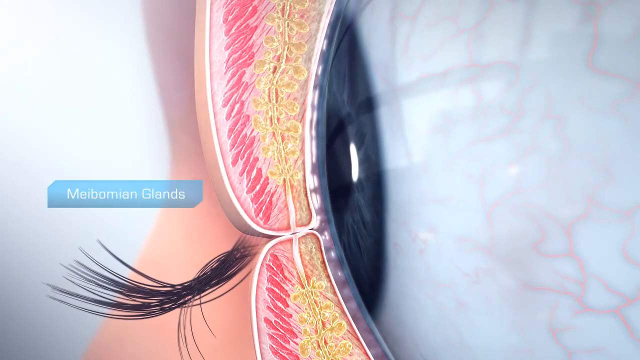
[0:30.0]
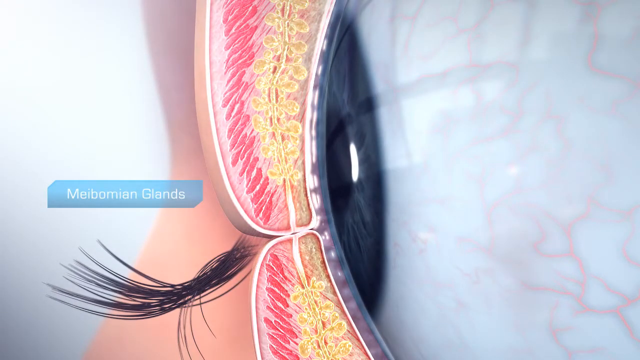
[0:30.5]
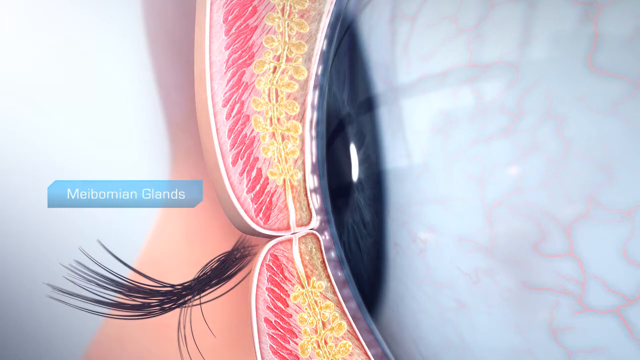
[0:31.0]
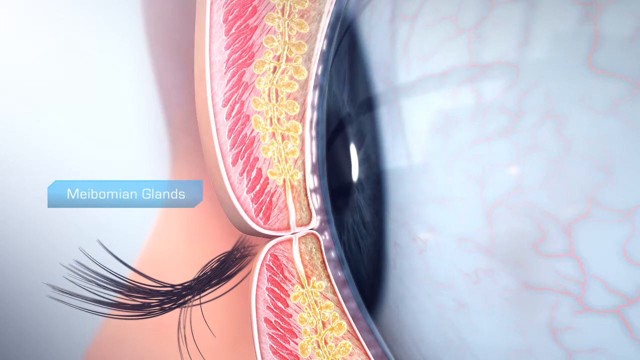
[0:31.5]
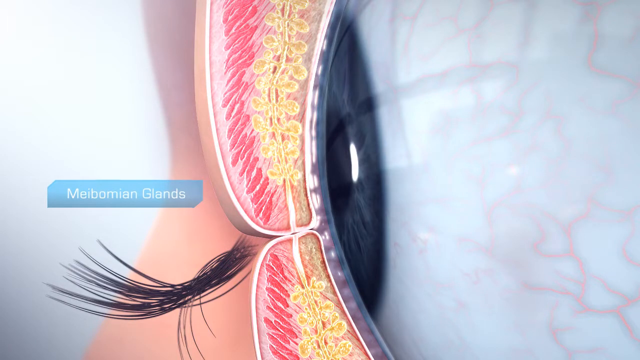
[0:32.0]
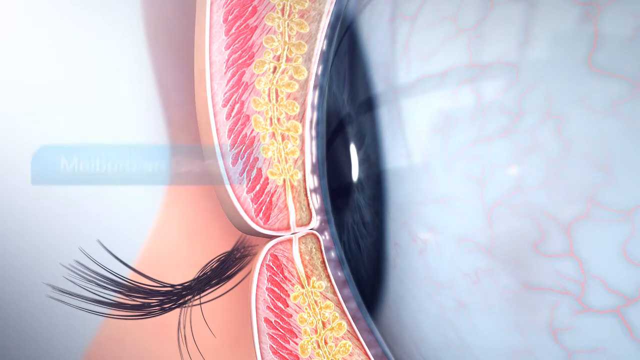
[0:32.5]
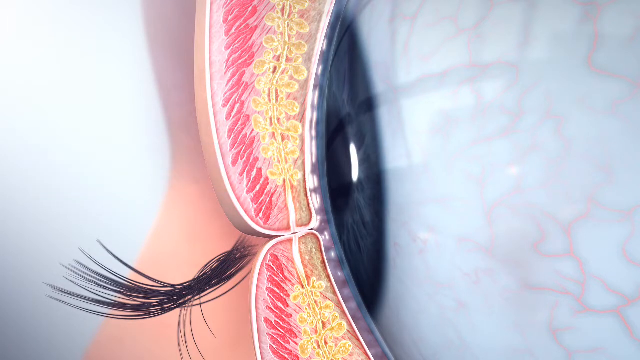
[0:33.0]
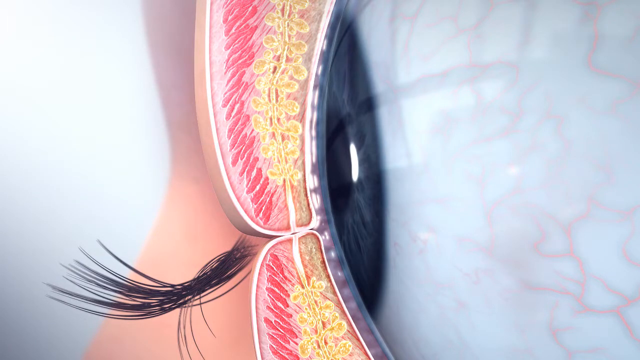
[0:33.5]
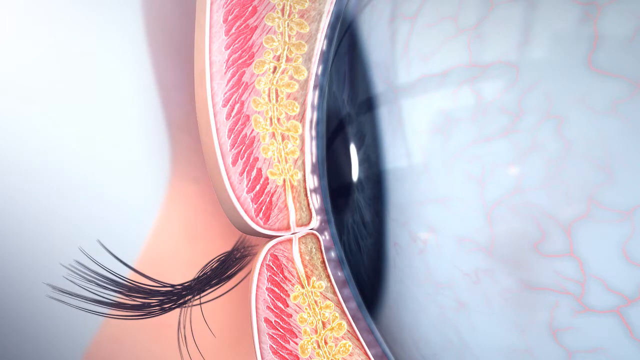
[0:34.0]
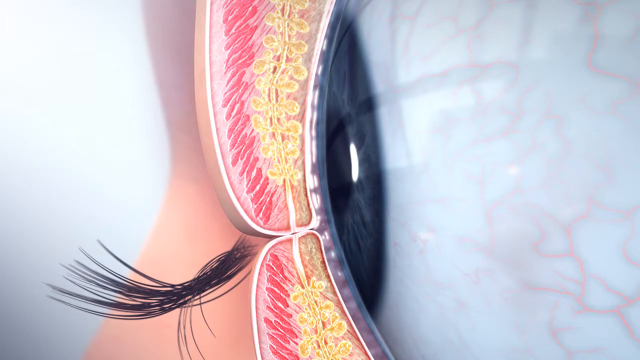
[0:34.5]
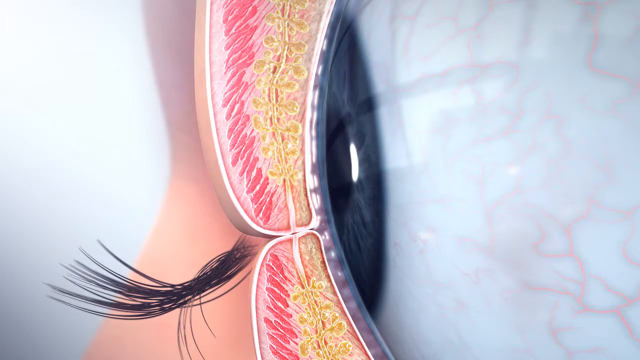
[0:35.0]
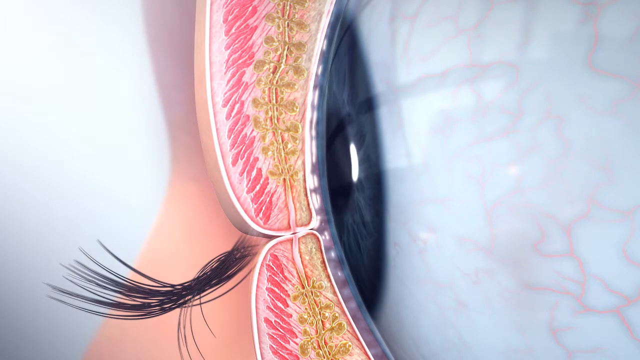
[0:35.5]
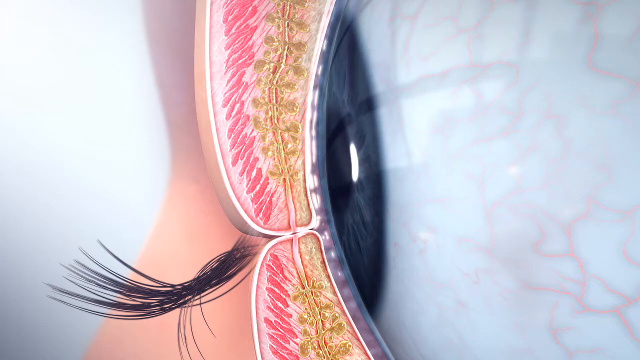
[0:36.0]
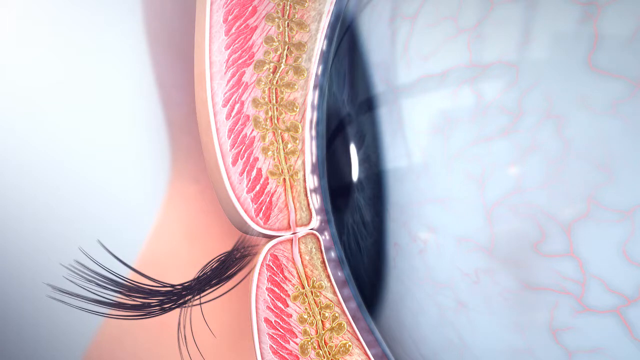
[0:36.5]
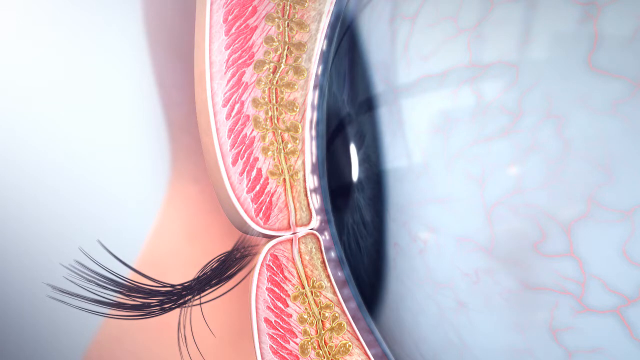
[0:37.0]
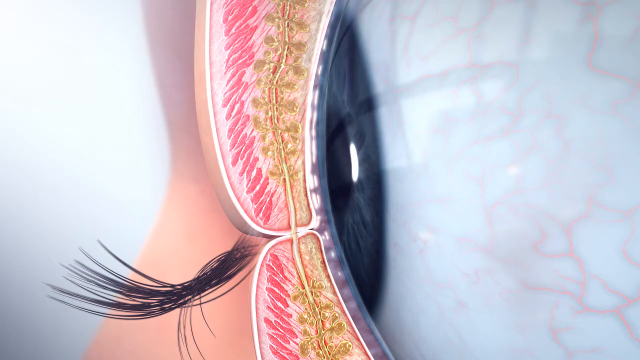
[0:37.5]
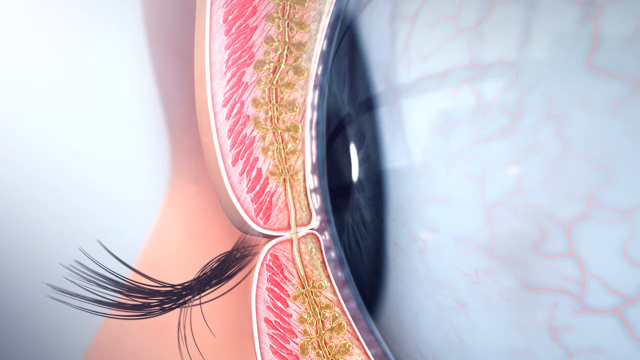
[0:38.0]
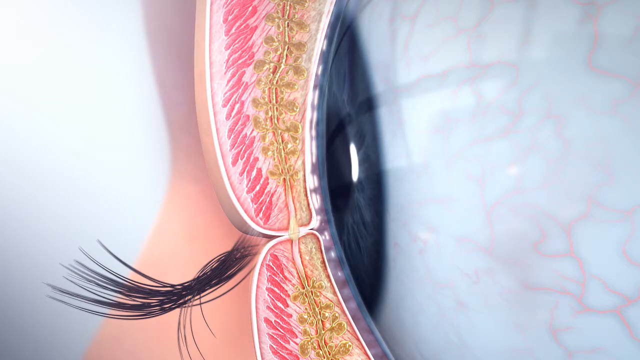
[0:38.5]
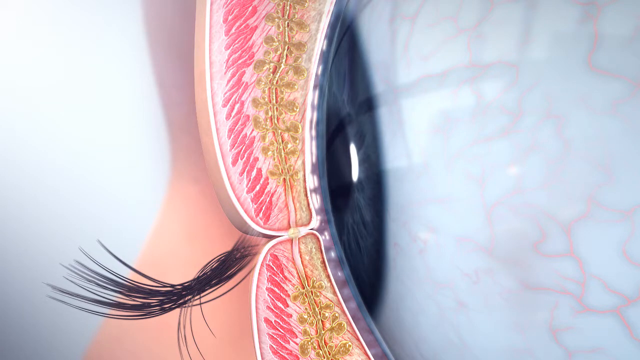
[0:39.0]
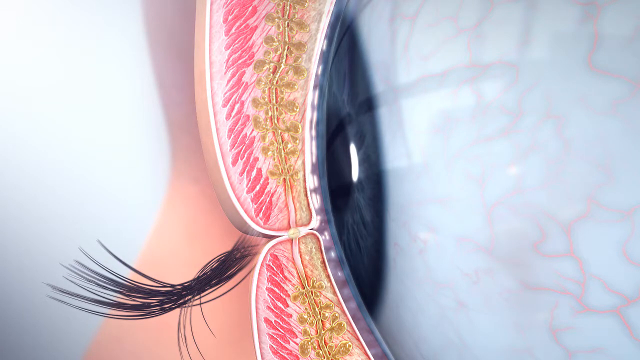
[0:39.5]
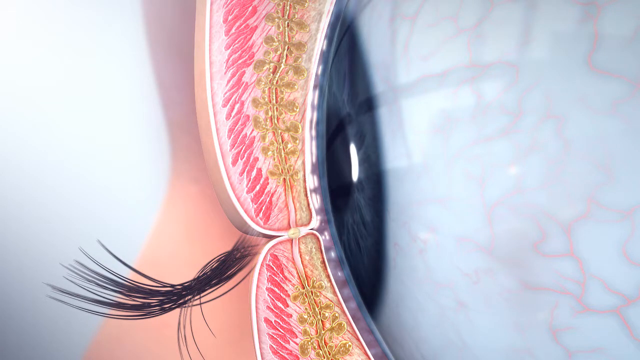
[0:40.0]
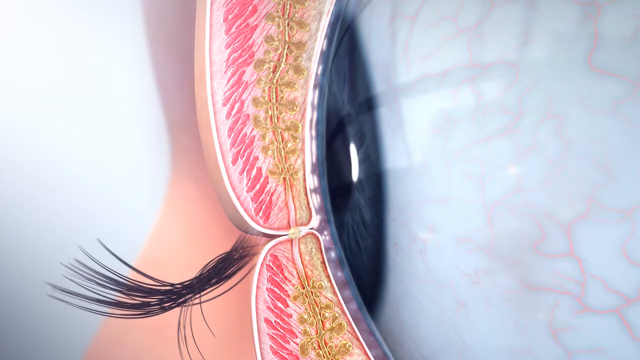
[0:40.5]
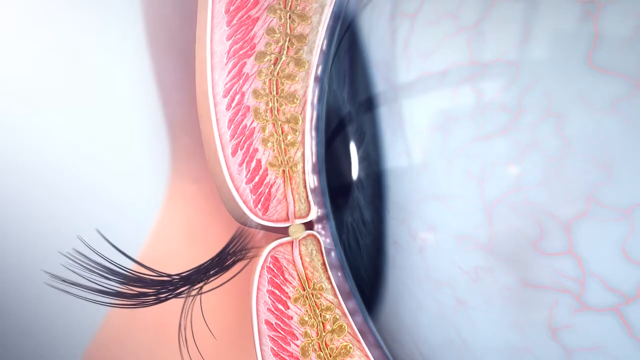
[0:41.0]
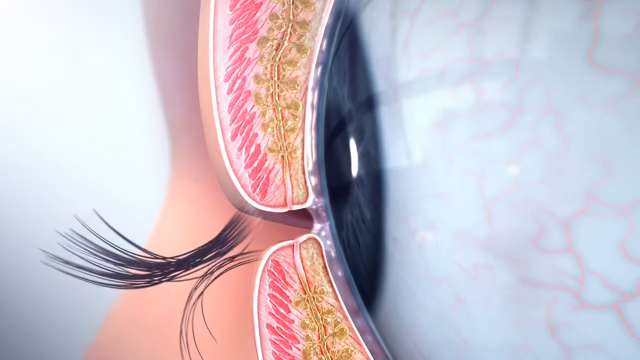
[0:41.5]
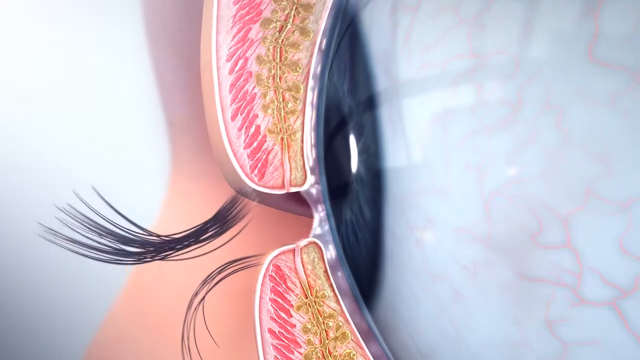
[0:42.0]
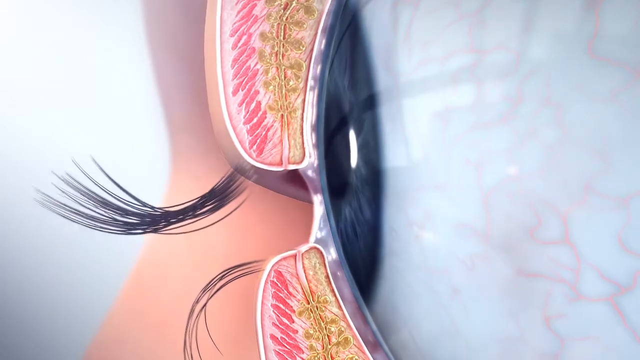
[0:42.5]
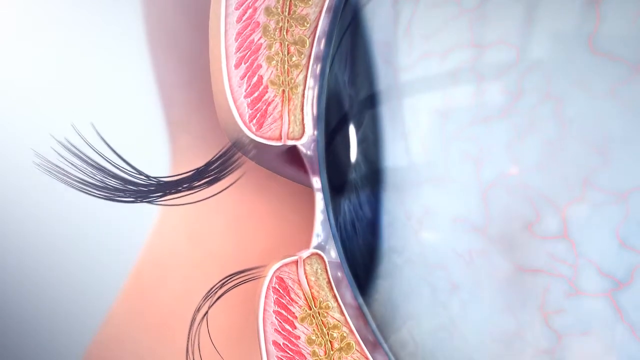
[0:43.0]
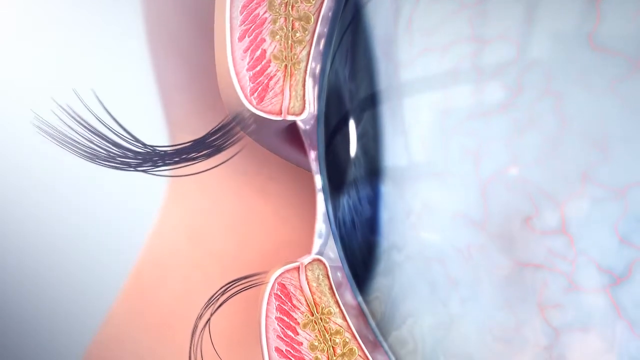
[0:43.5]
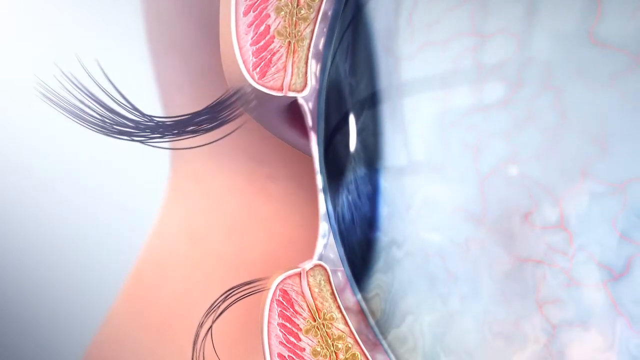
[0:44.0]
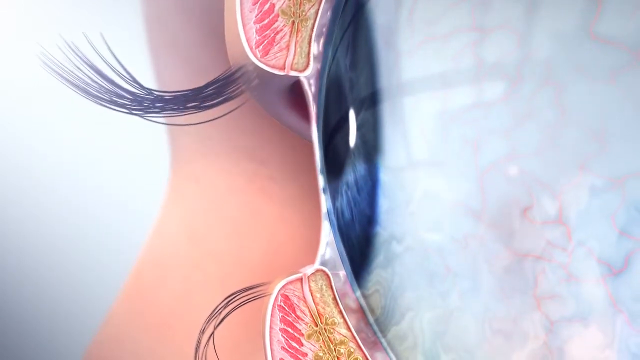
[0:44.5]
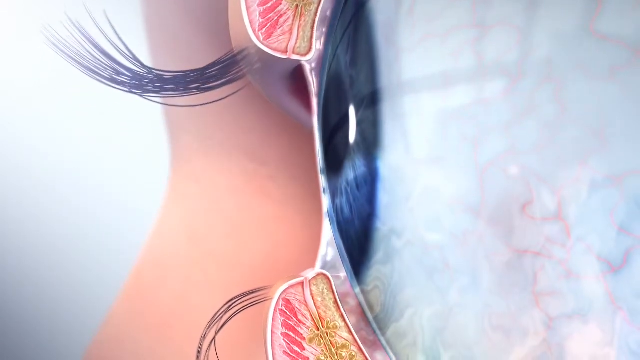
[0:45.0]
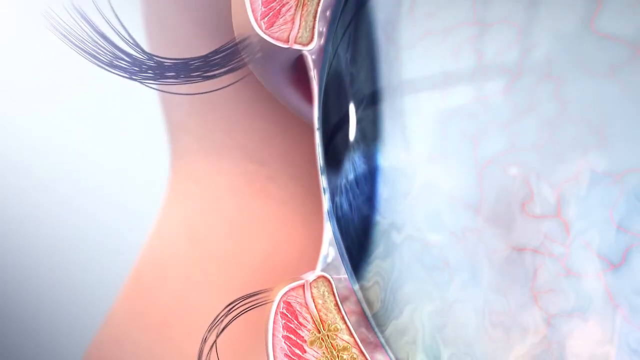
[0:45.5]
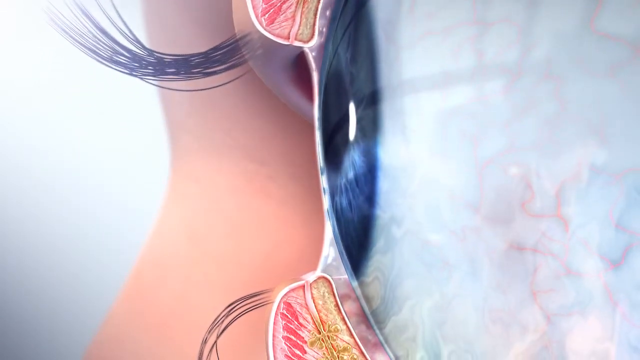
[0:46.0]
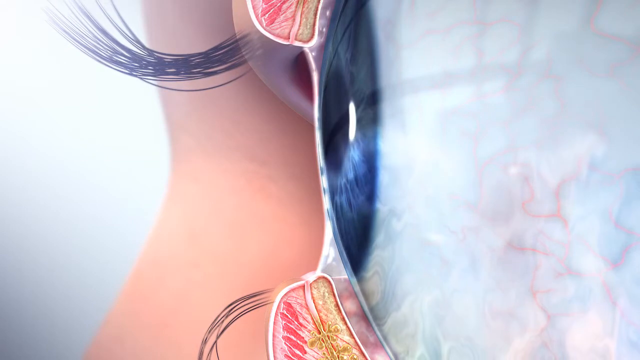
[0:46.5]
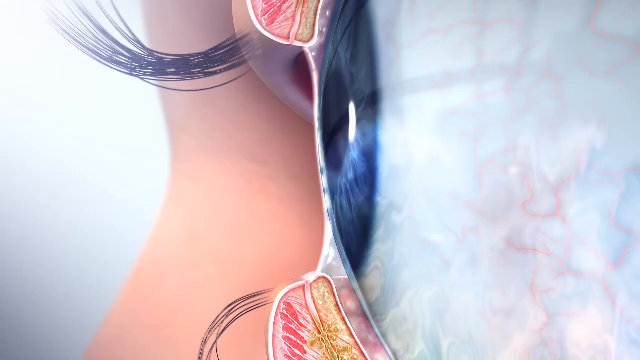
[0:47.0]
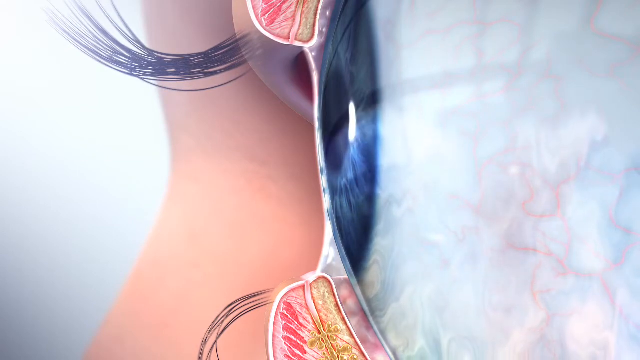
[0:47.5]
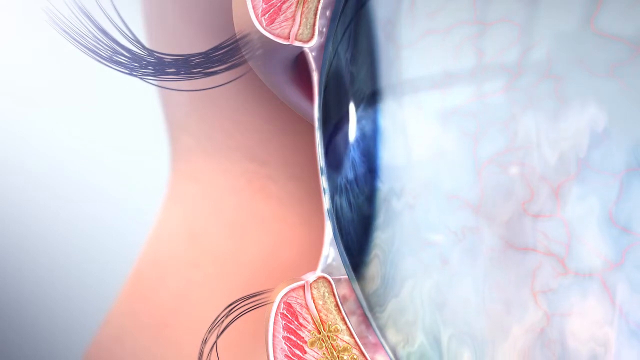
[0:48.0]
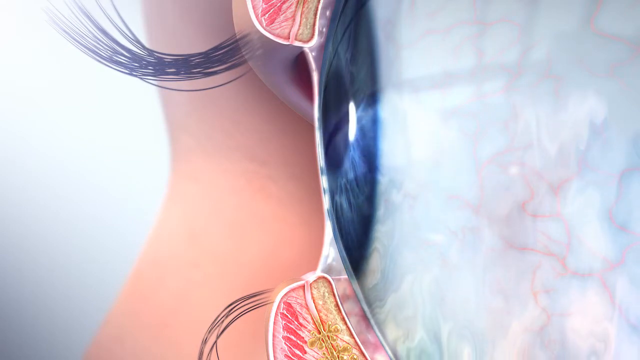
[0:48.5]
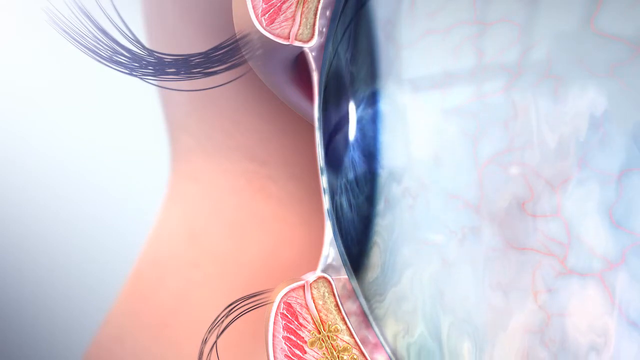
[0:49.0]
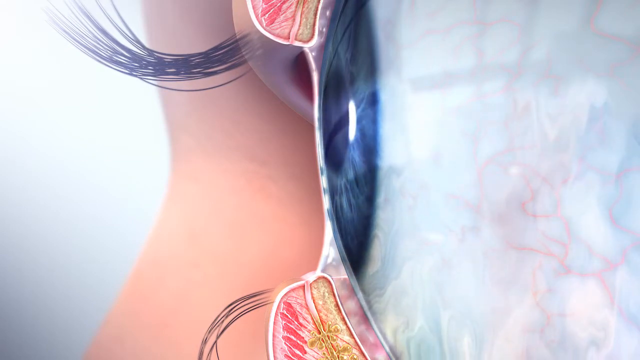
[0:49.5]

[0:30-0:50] The same image remains, with the words "Meibomian glands" off to the side. The eyelid is shut, and some kind of fluid travels back and forth from the top lid to the bottom lid while the eye is shut; this is apparently the Meibomian glands at work. As the eye opens, the fluid lubricates the surface of the eye. A close-up of the eyeball is on the right side, looking toward the left. The view is cut away to show inside the eyelids: the top inside is pink, apparently showing the muscles, and underneath that are probably fatty tissues, appearing as little yellow knobs, with a tube running through all of it, seemingly the Meibomian gland. Something looks like it is moving through that tube, and when the eye opens, whatever has moved through the gland appears to help keep the eye wet and lubricated. The shot ends with the eye open, still showing the profile of the eyeball.